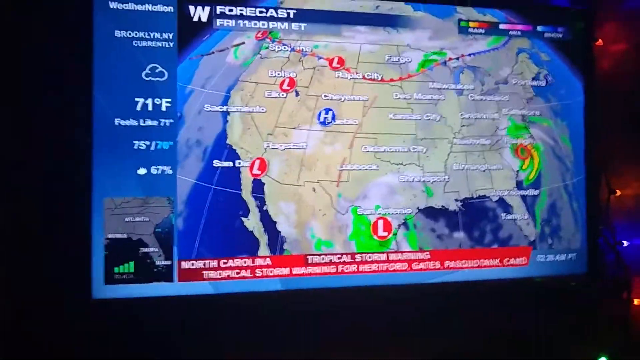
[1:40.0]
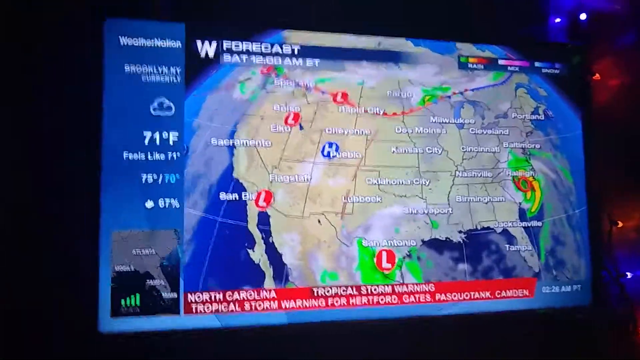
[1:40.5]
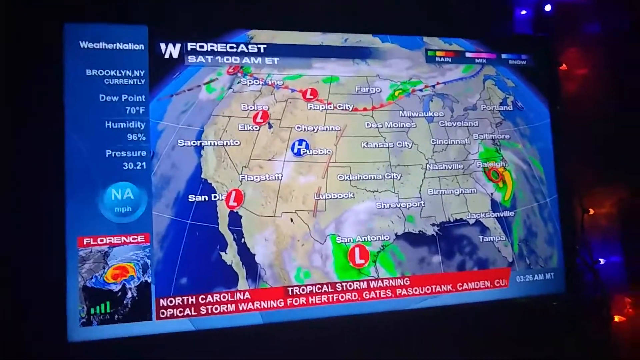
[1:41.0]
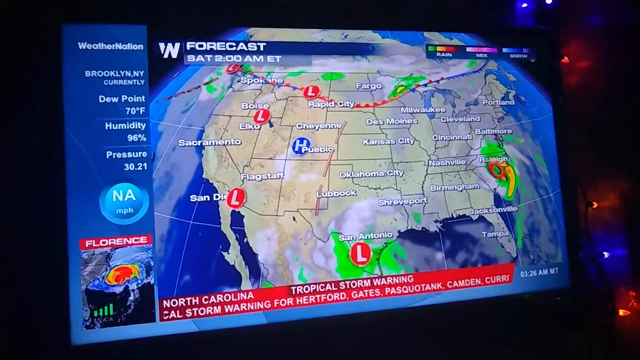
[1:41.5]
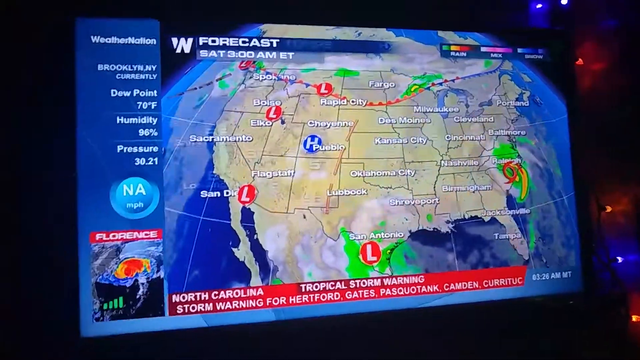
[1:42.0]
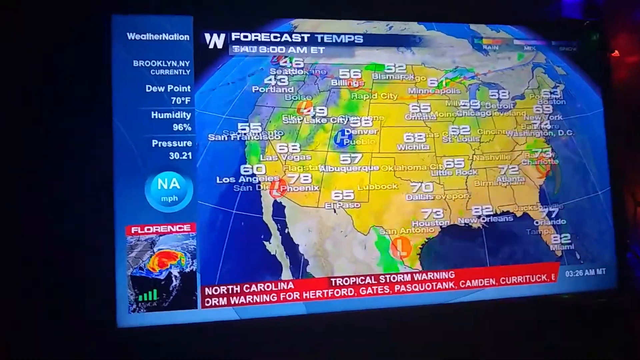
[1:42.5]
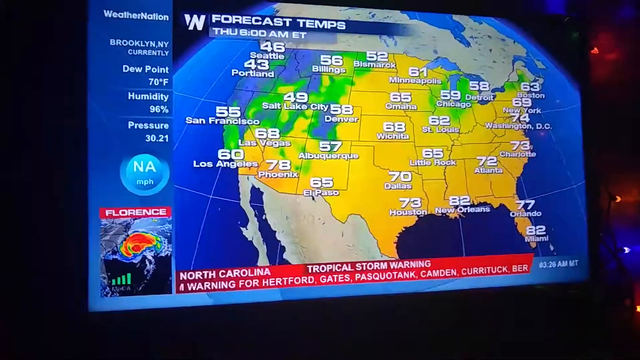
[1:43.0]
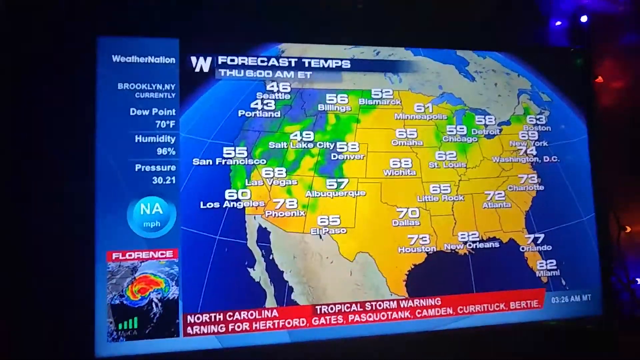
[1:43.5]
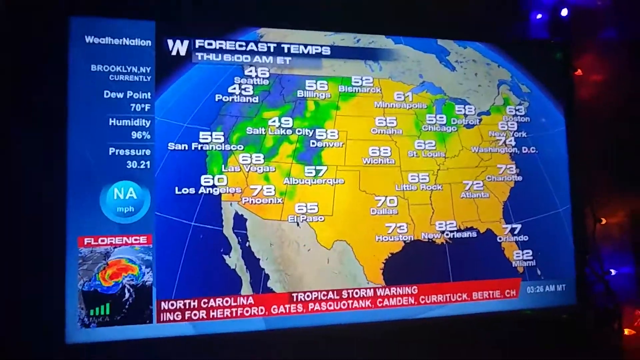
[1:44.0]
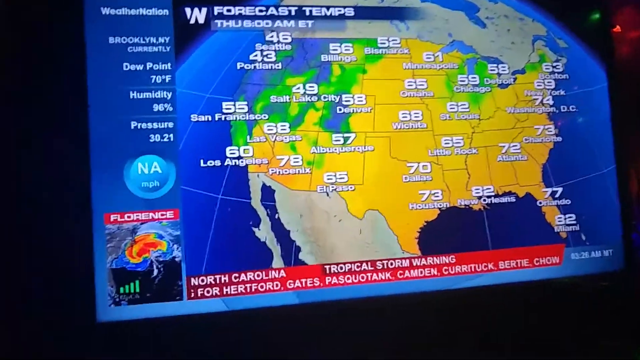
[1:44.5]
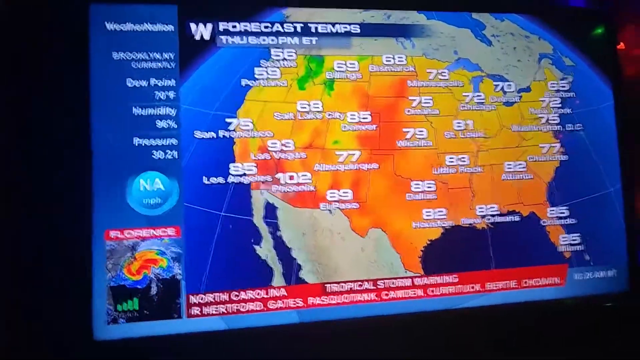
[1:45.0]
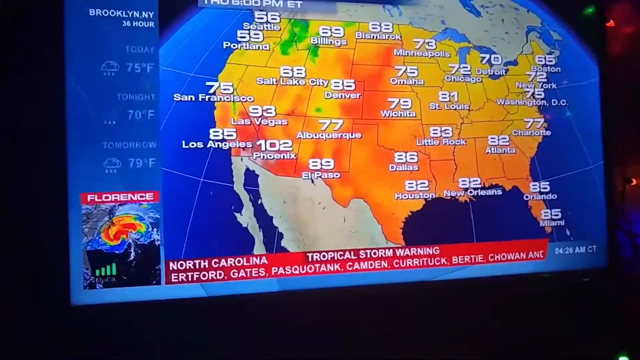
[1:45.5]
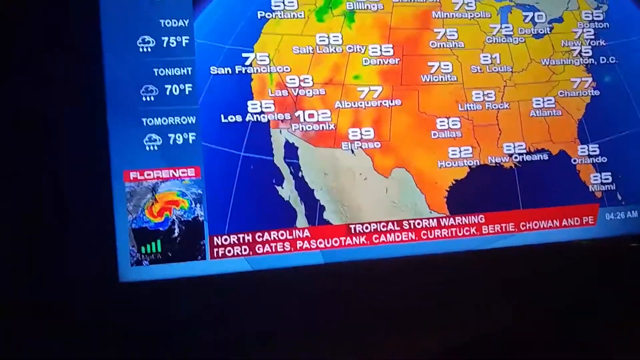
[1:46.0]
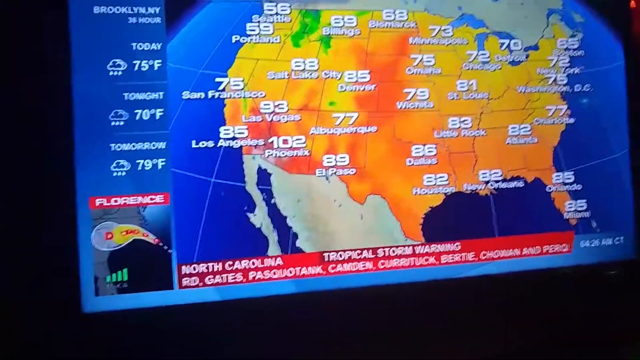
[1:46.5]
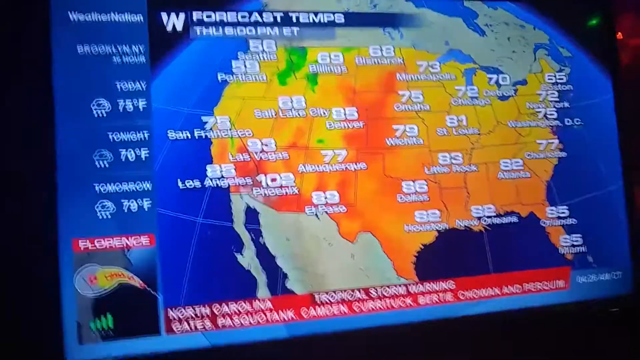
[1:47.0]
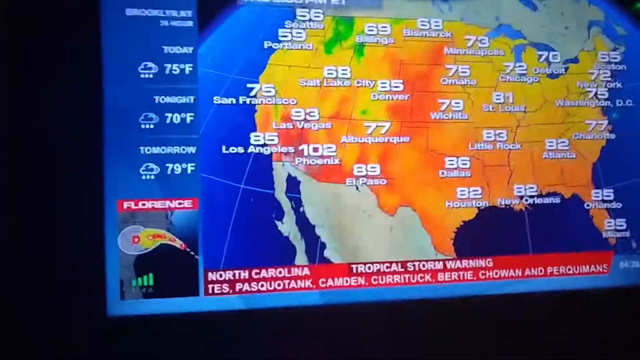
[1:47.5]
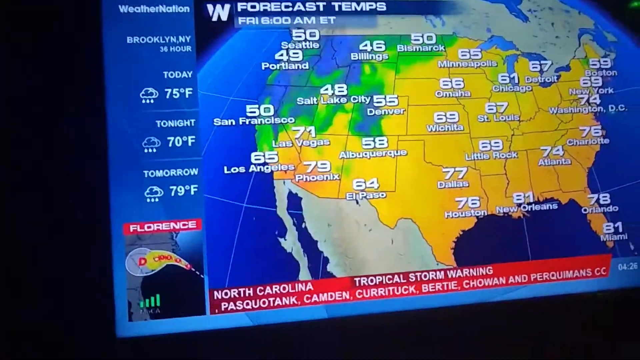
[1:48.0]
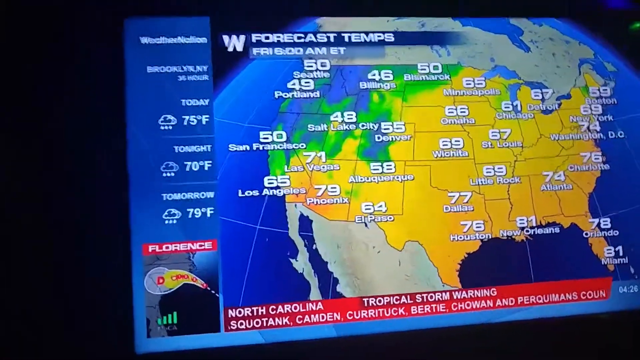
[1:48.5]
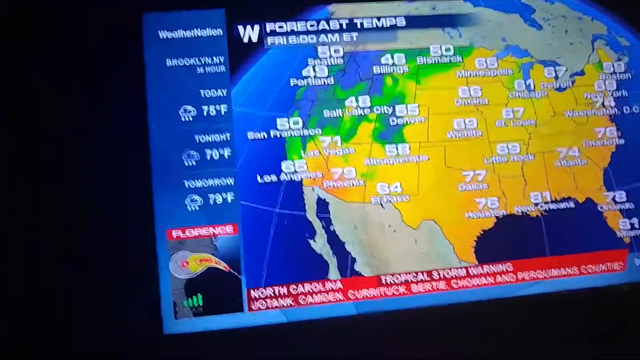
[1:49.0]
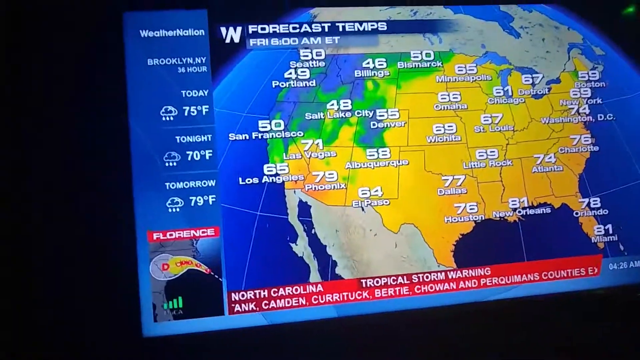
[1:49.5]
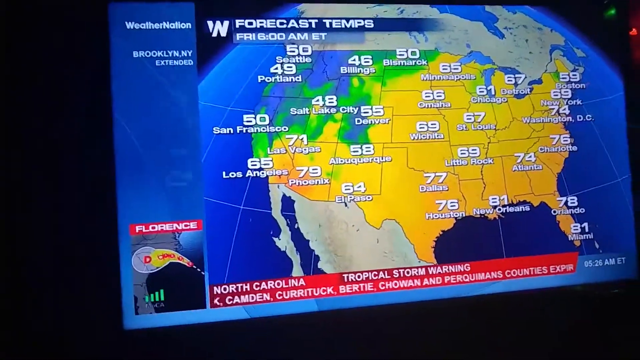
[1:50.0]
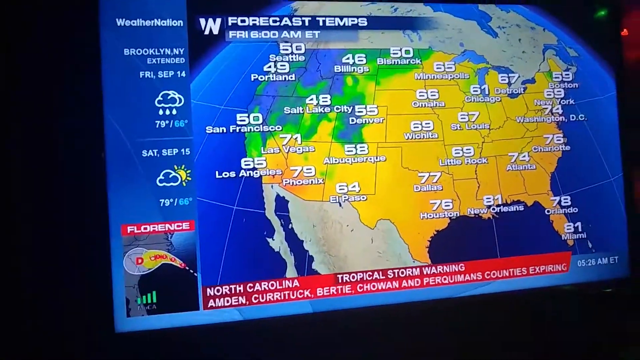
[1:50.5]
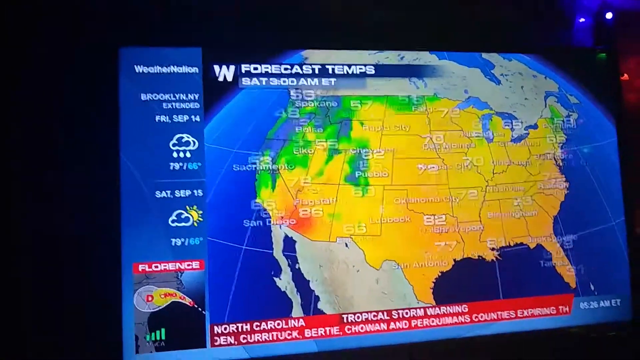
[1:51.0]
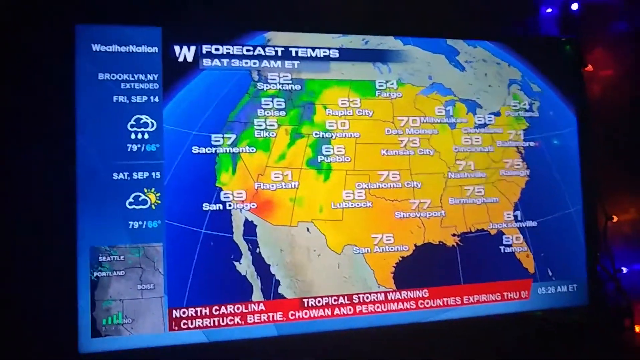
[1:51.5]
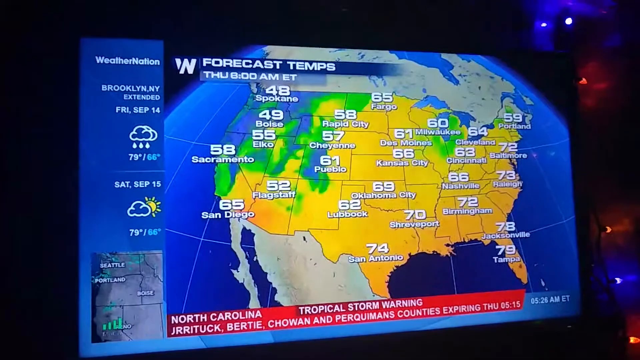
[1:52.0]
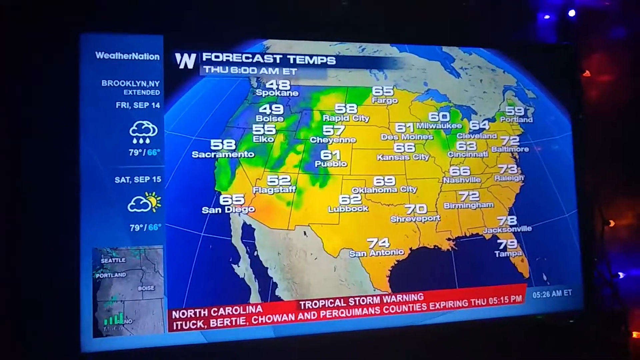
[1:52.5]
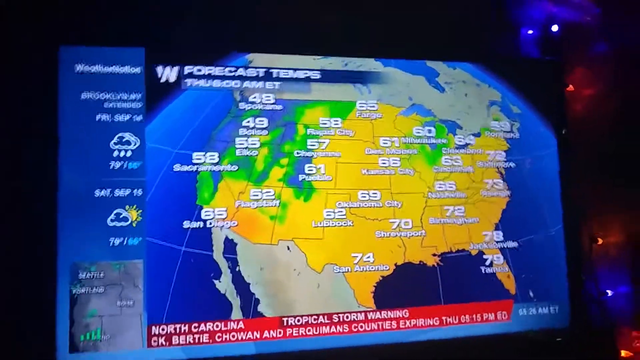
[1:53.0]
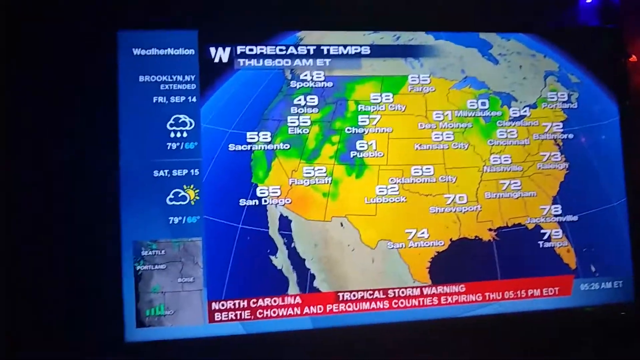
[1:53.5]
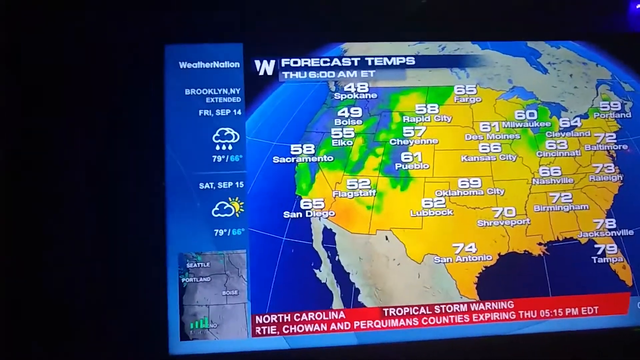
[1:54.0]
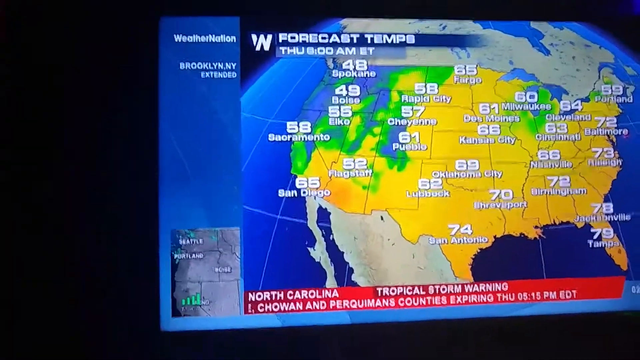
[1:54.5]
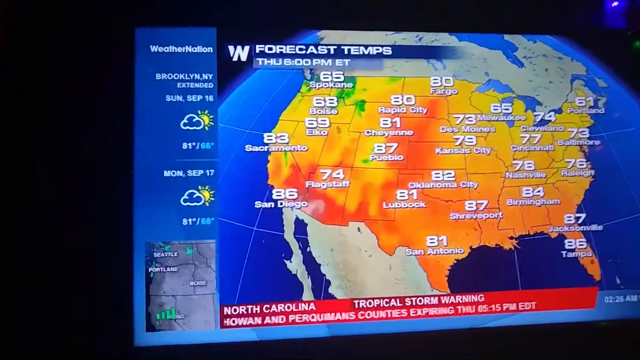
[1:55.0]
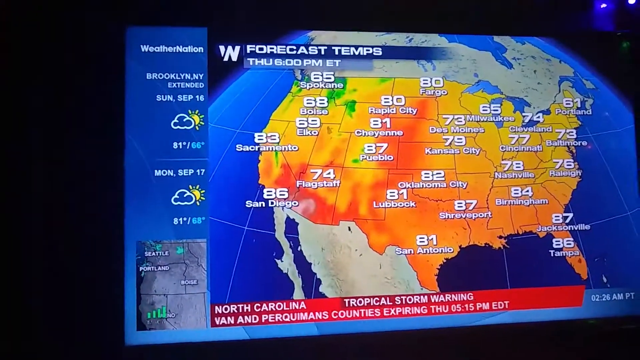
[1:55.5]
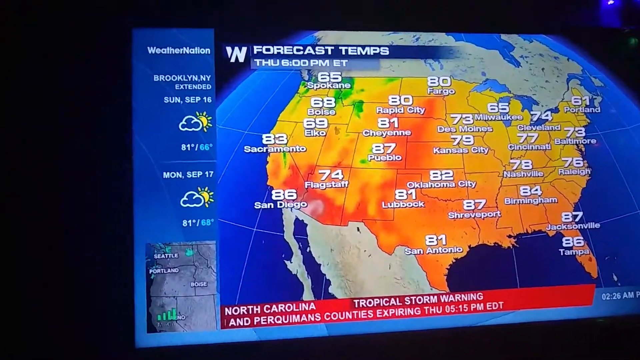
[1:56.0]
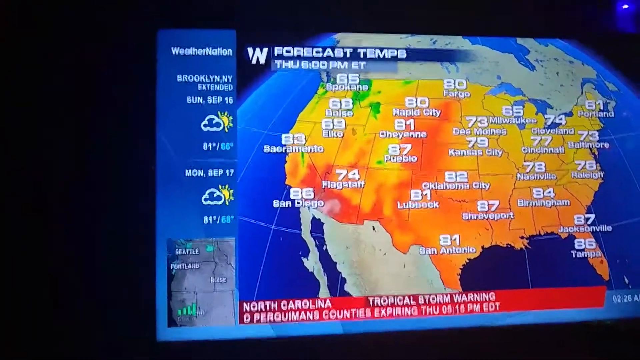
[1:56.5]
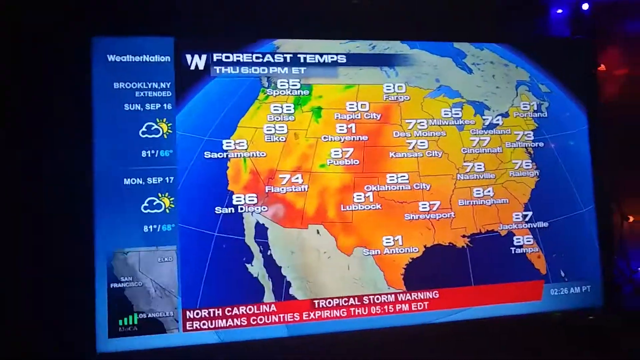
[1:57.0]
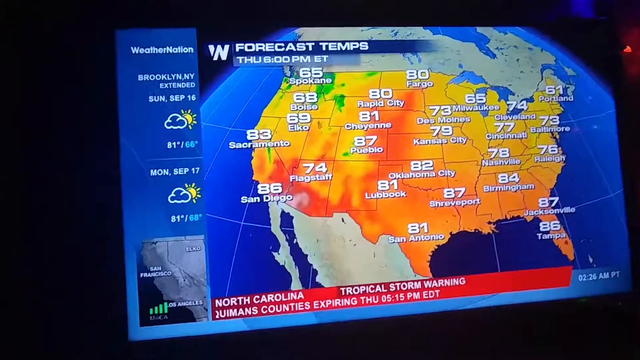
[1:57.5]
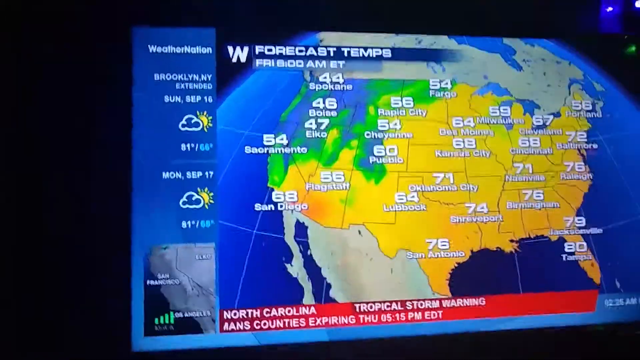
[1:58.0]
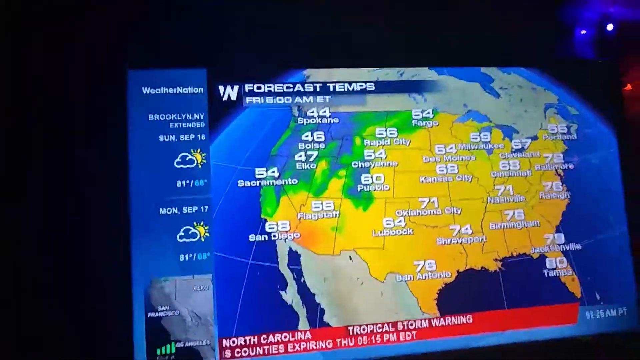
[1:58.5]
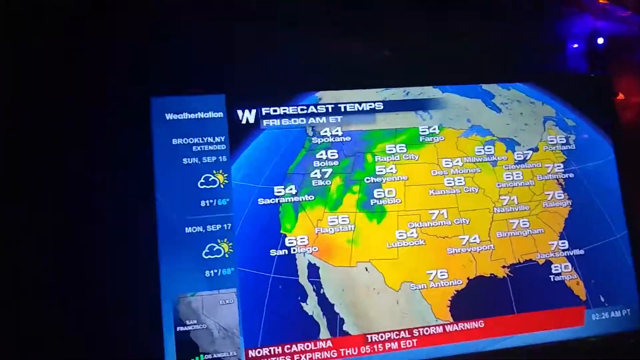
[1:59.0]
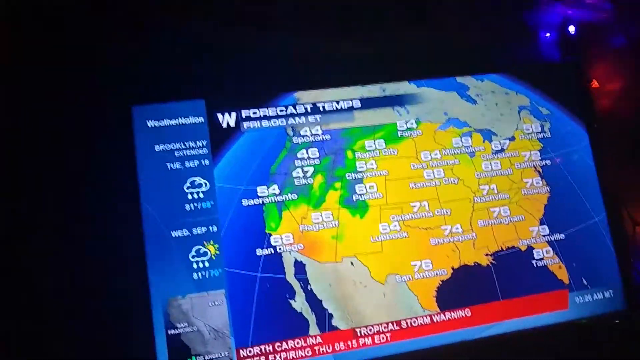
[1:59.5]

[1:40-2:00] The forecast goes back to temperatures, showing yellow in most areas, some green in the northeast extending towards the northwest, and blue just in the northwest and near Denver. Red text scrolls by at the bottom of the screen reading a North Carolina tropical storm warning, with counties listed below scrolling past. The temperatures then transition to warmer values, with most of the south covered in dark orange and temperatures ranging from what looks like 102 to 56. The areas in the northwest and the north are now yellow, with some green in the far north. Another transition shows cooler temperatures, with the time at the top reading "Friday, 8 a.m. ET." More transitions scroll swiftly through different times. The camera begins shaking a lot, the screen becomes somewhat blurry, and the camera begins pulling back.